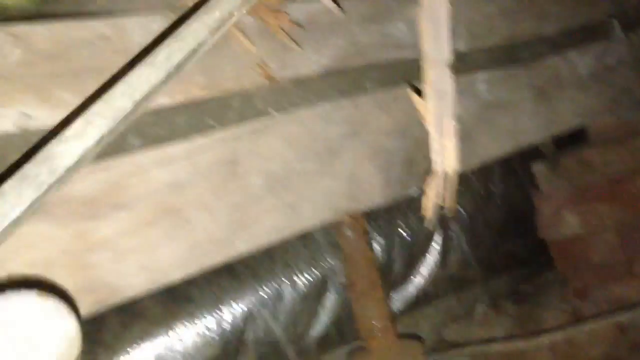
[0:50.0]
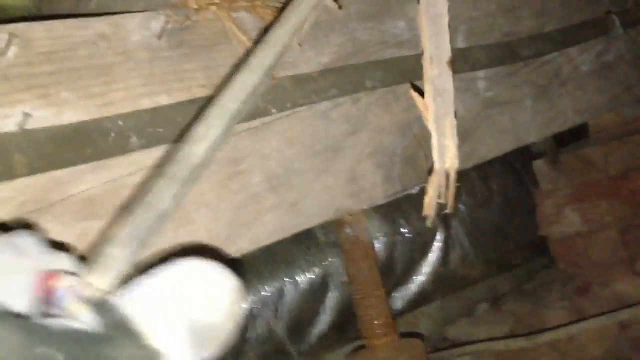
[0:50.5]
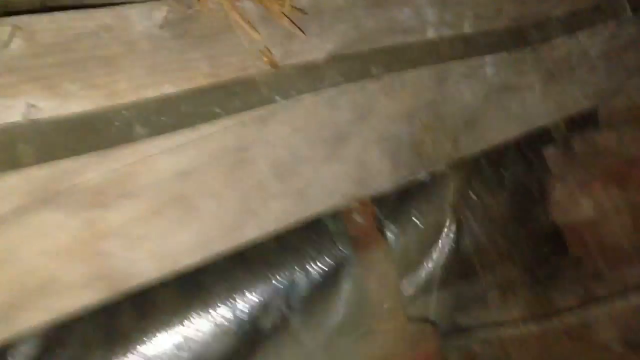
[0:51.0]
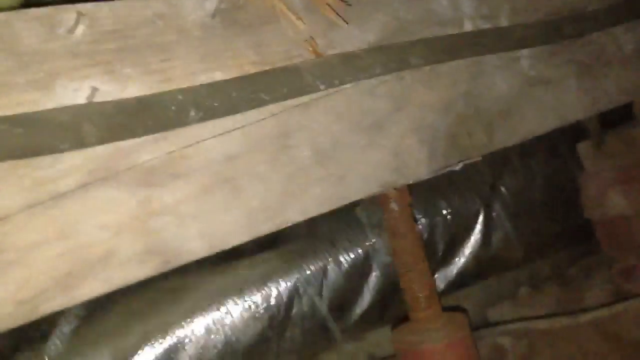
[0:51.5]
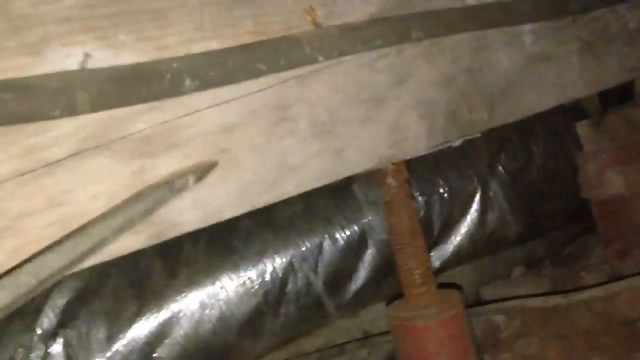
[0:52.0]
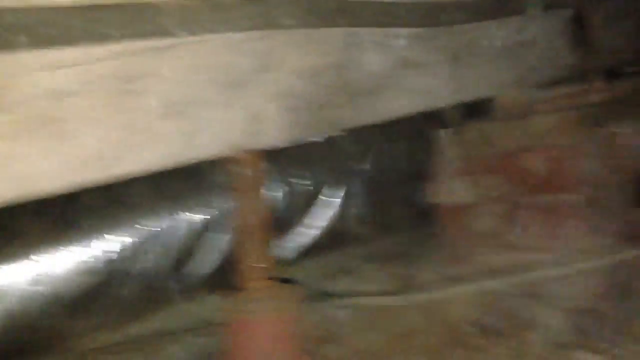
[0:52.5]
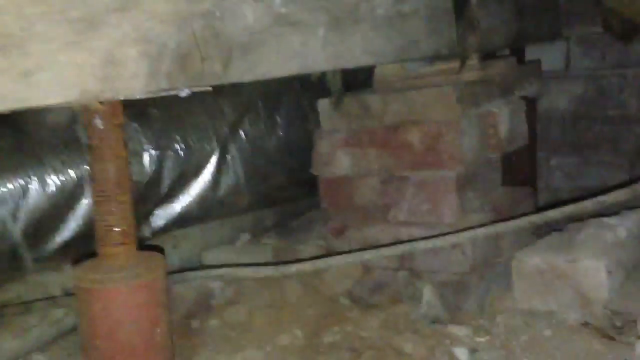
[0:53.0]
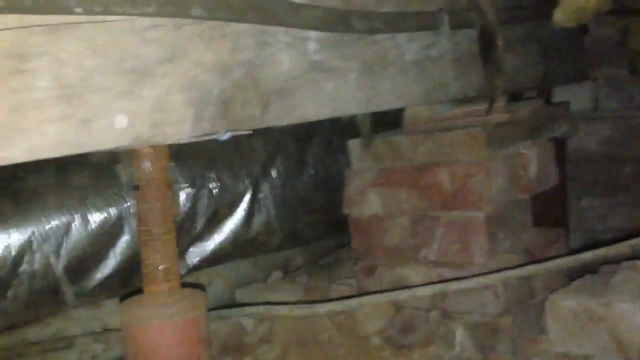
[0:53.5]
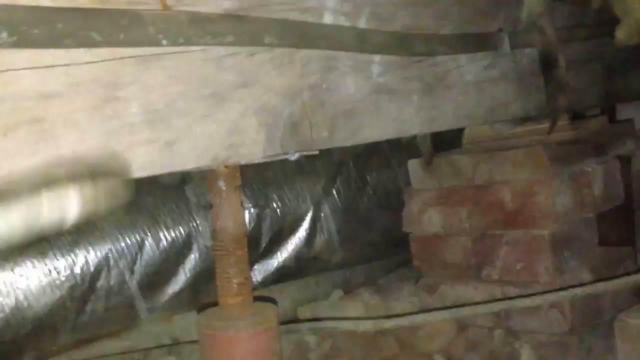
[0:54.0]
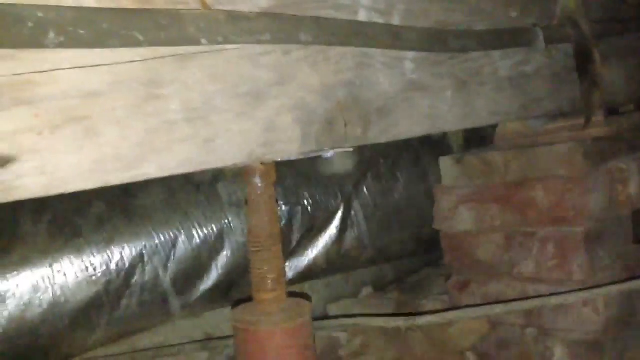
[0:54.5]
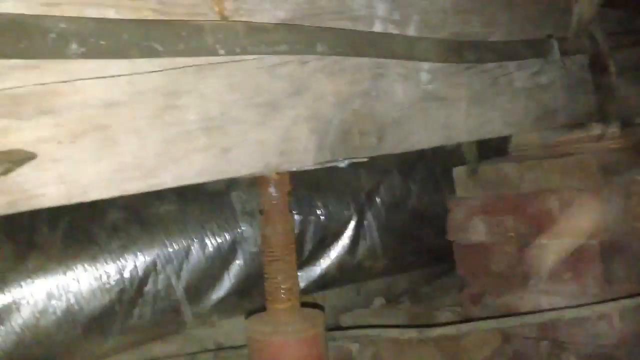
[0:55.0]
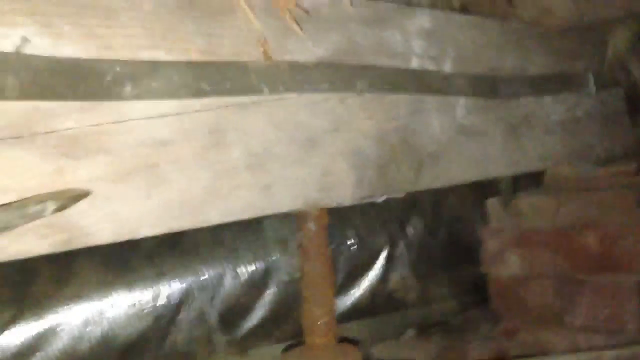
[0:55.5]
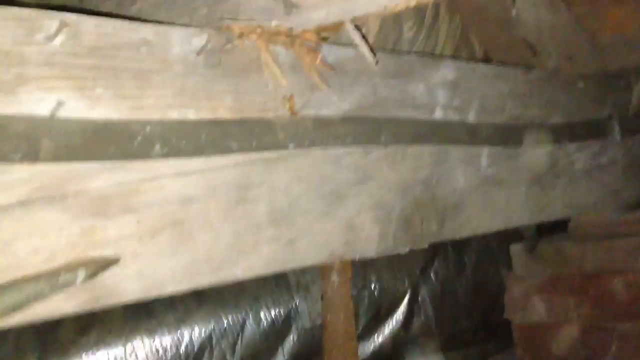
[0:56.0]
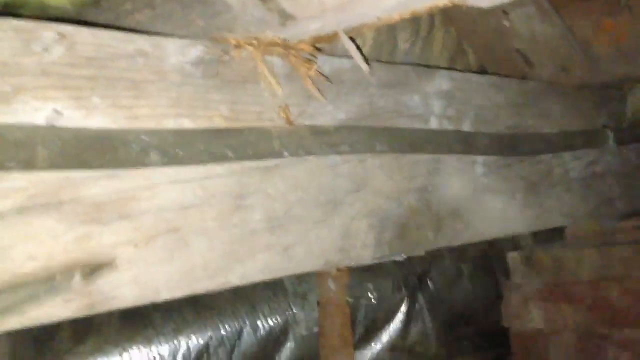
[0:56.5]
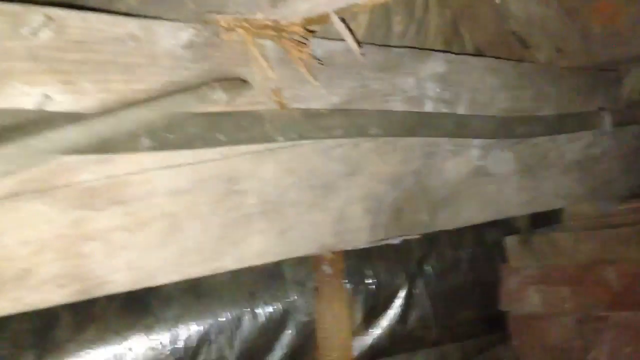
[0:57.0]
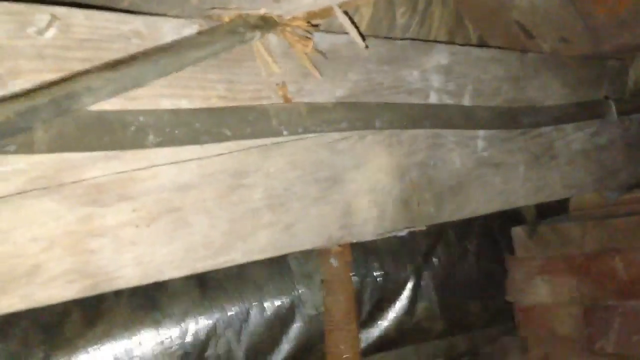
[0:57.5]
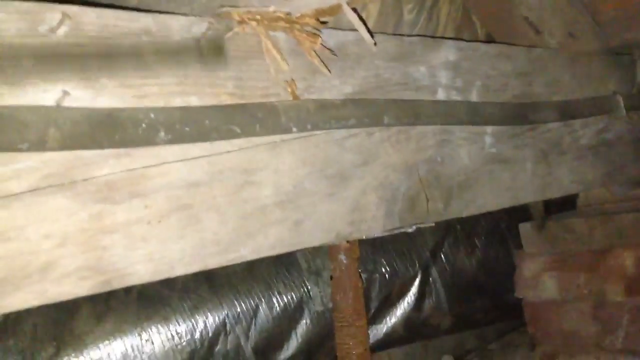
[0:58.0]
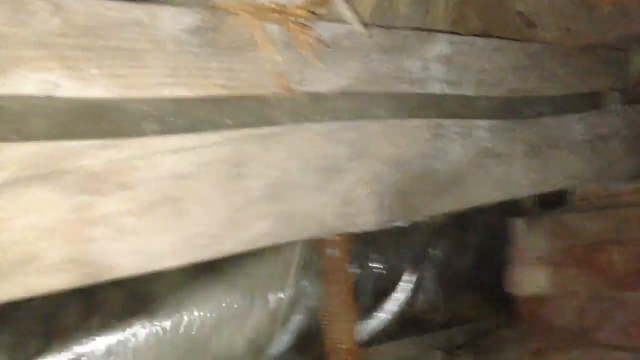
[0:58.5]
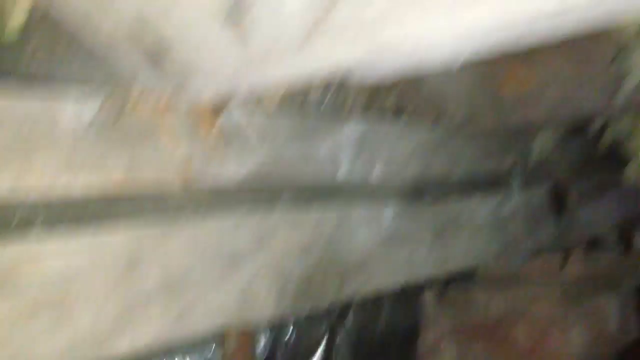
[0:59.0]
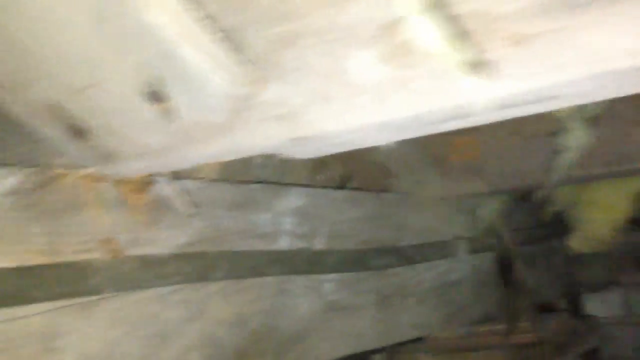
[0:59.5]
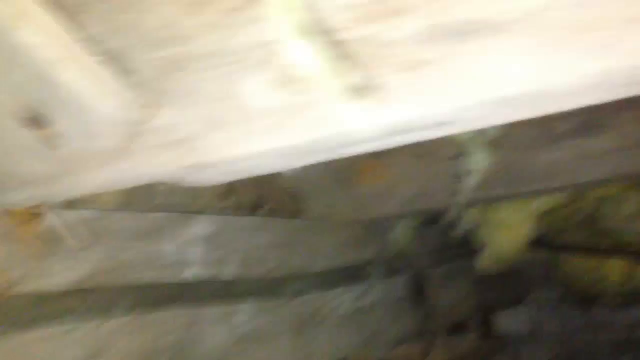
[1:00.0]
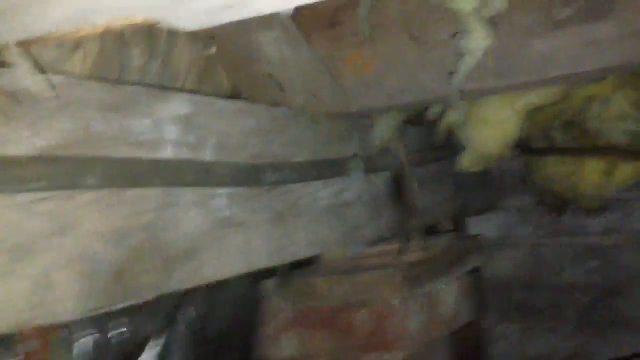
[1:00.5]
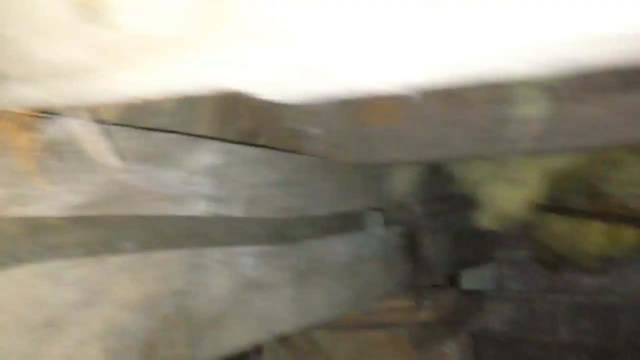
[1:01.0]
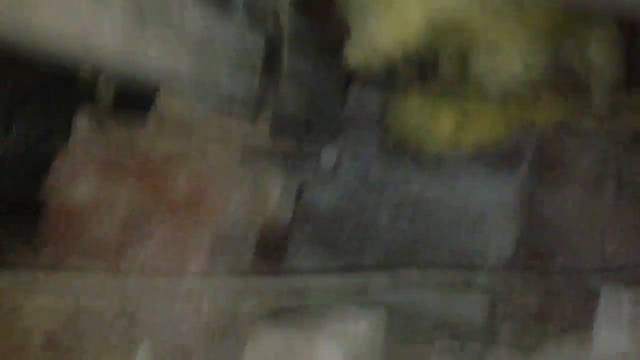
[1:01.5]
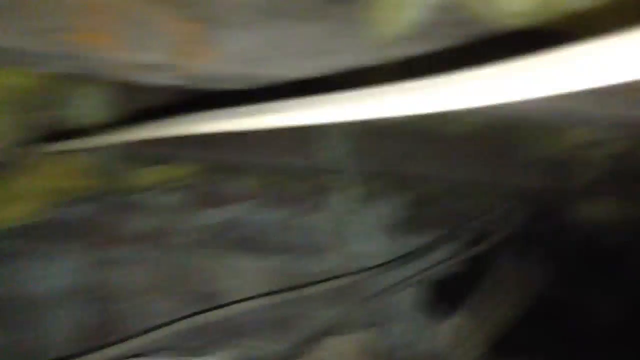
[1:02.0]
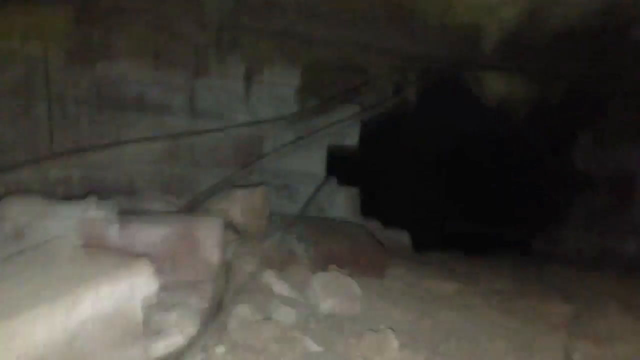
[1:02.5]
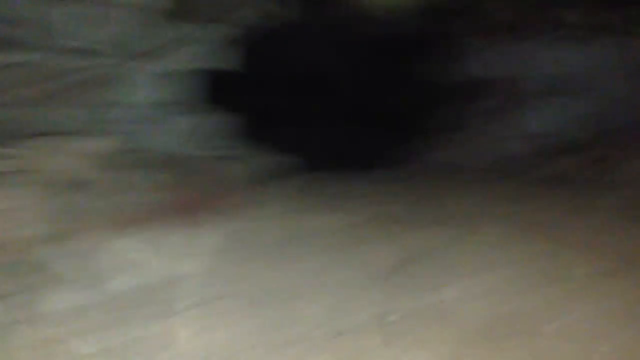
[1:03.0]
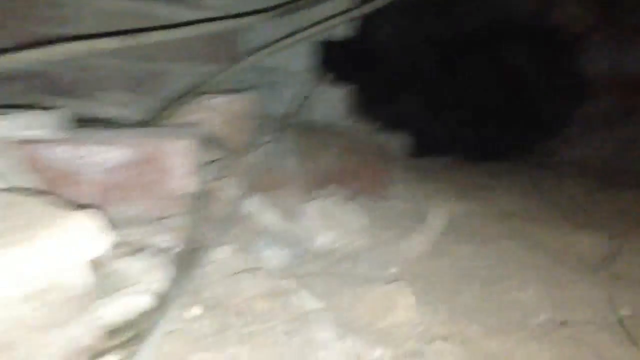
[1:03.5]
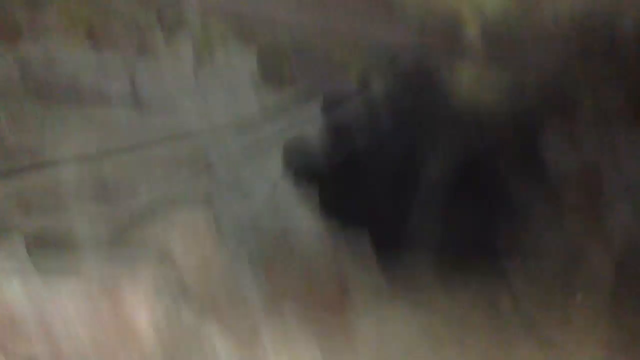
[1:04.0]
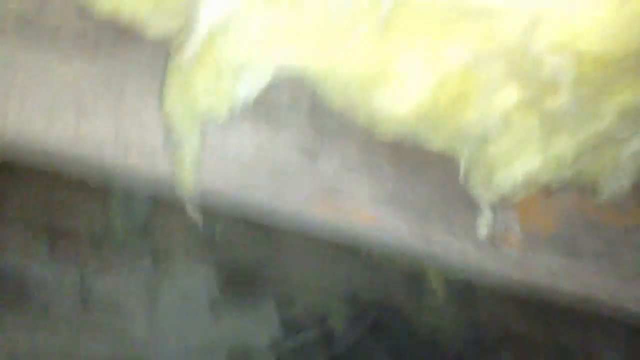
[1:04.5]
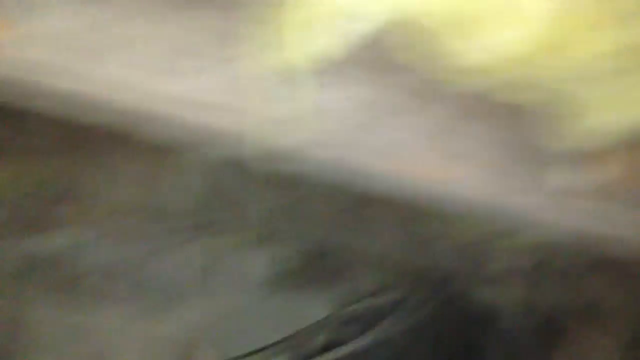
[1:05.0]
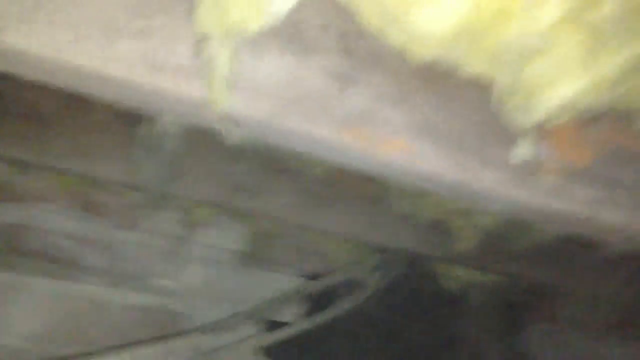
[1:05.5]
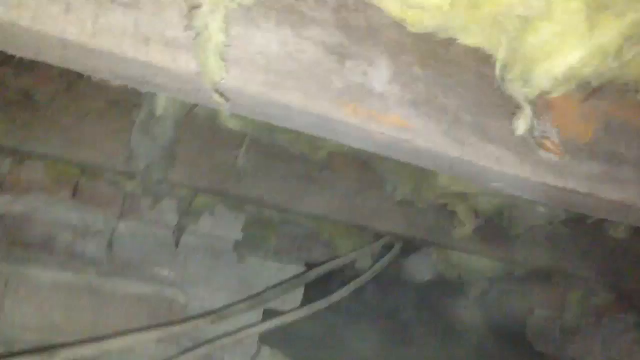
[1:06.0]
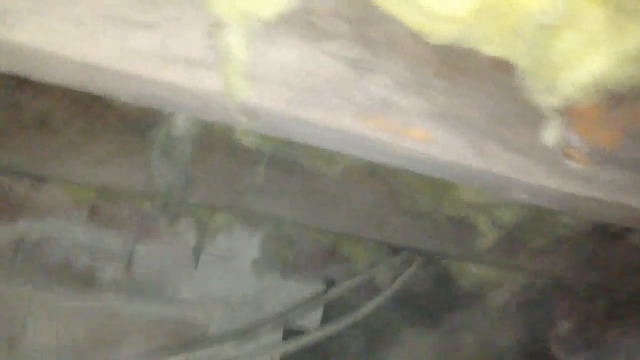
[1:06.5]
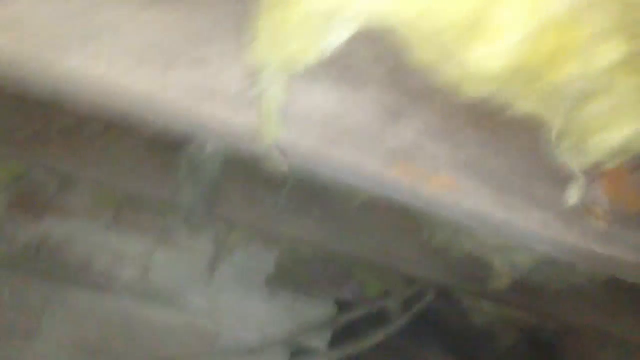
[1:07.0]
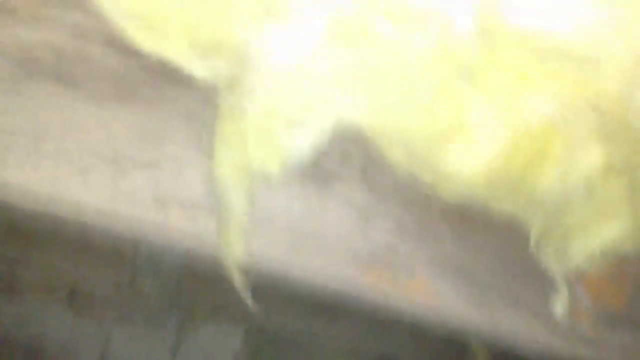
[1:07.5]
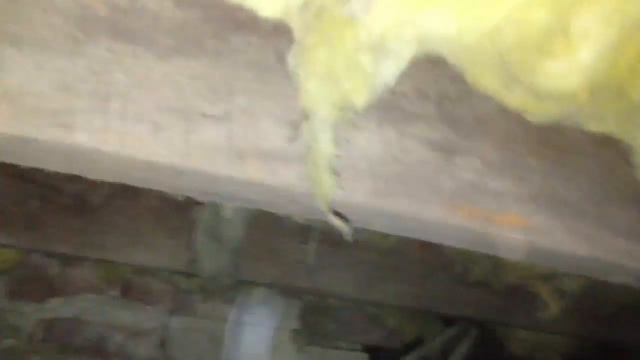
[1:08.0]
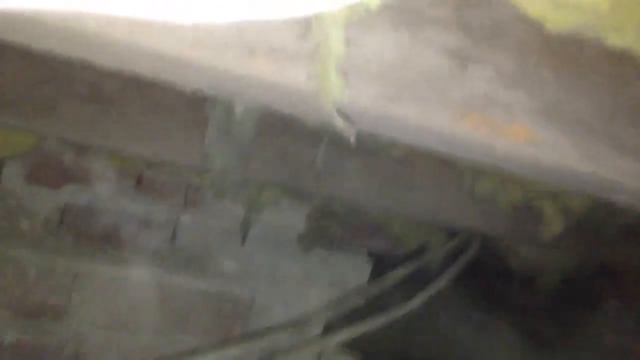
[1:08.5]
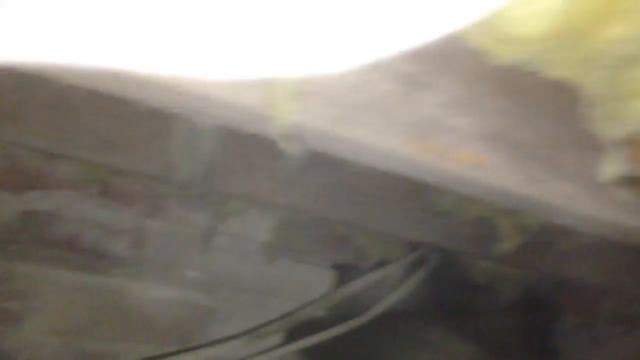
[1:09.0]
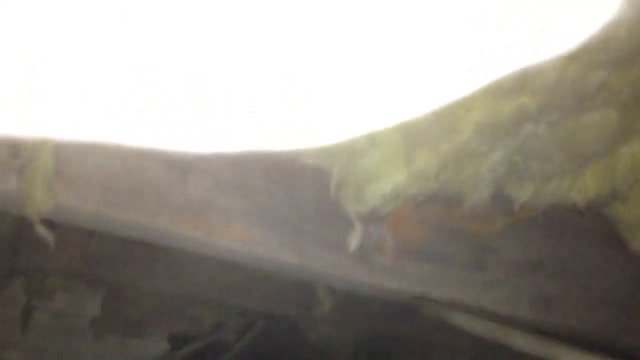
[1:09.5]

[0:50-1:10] The crowbar still comes in from the left side, going up about a third of the way over and off the top, with a little of the thumb in the bottom left corner. Just right of center is the piece of wood he has broken off, pointing down about two-thirds of the way. The crowbar keeps digging into the wood, flicking off pieces, and the hand moves in a little more from the left side. The hanging piece of wood is knocked off as the crowbar drops down toward the bottom, and he taps the bottom piece of wood with the crowbar. The camera pans right, showing that the wood to the right of the jack is held up by a big pile of bricks, resting on top of it. The crowbar comes in from the left center again and taps the bottom piece of wood as the camera pans left and up a little, then the crowbar goes back to the board over the top and pokes at it. The camera goes up and pans right, really jerky and hectic, then farther right: there is a big hole in the wall, more asbestos hanging down from the top, and some cords coming in from below the asbestos and going off the bottom. The crowbar comes in from the right, pointing at the wood just below the asbestos.